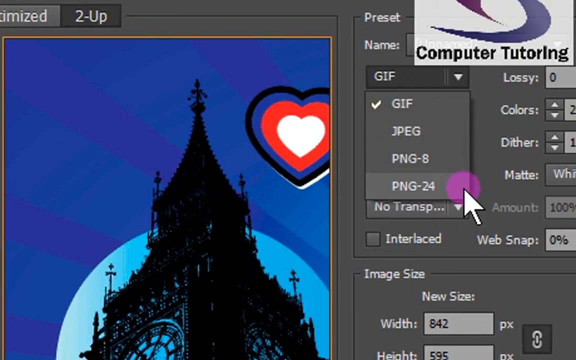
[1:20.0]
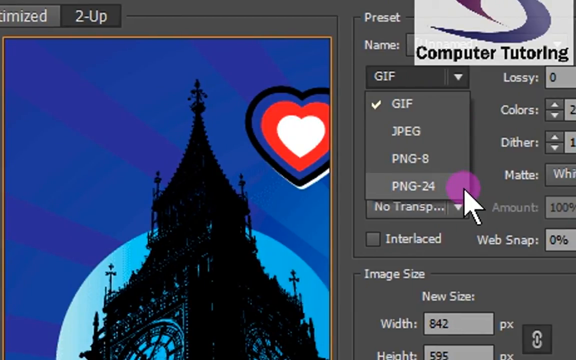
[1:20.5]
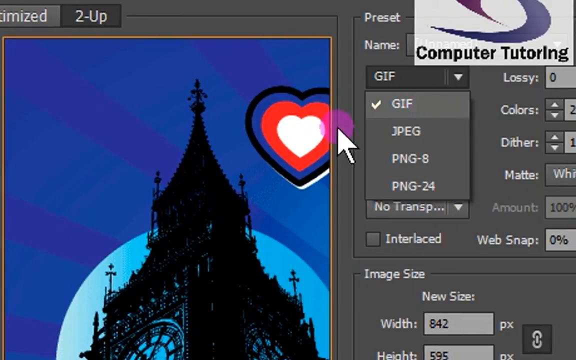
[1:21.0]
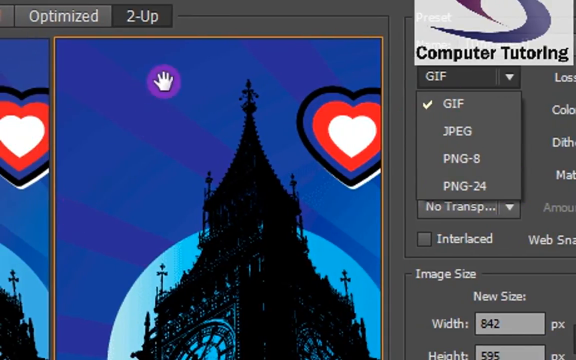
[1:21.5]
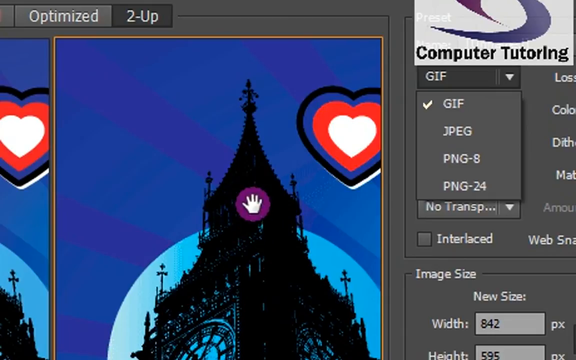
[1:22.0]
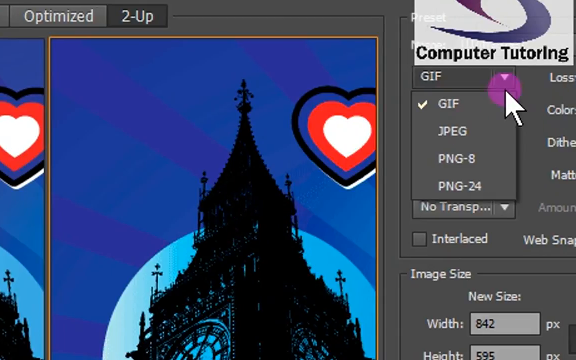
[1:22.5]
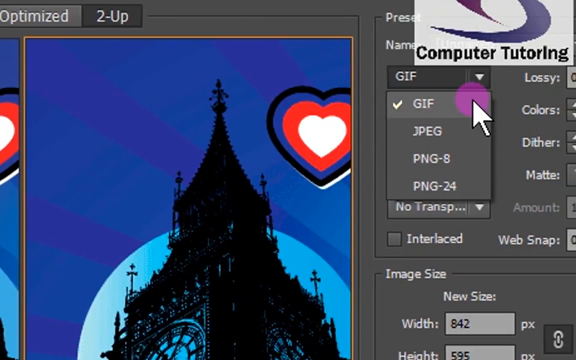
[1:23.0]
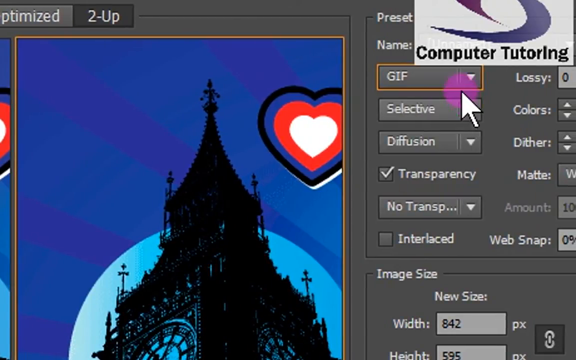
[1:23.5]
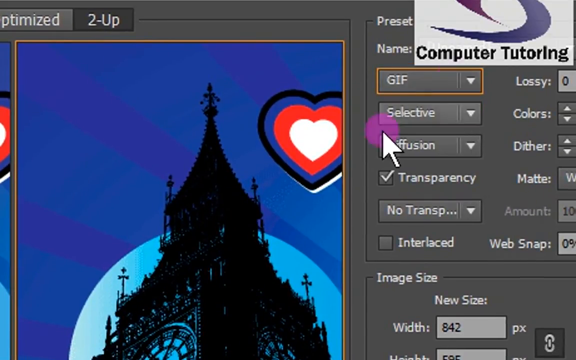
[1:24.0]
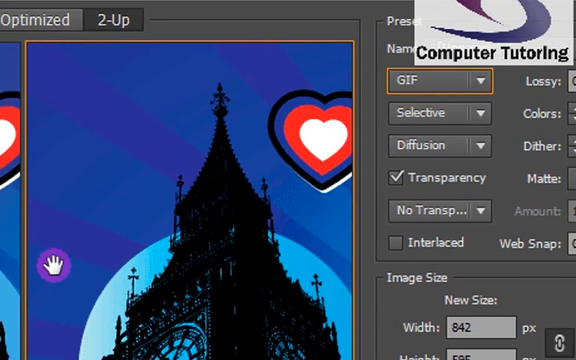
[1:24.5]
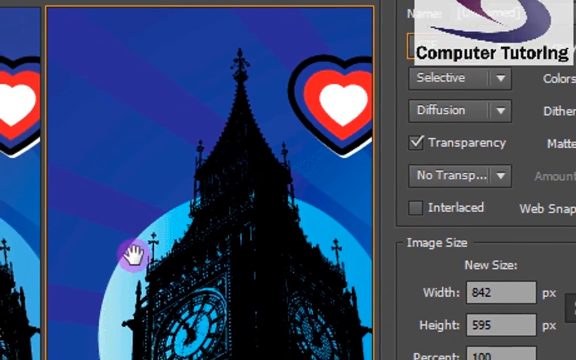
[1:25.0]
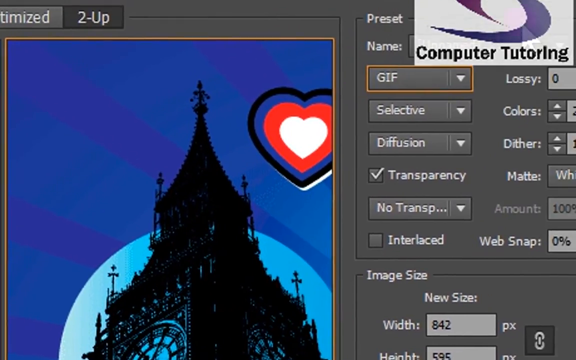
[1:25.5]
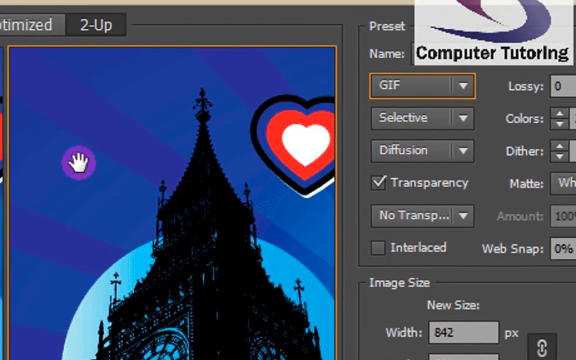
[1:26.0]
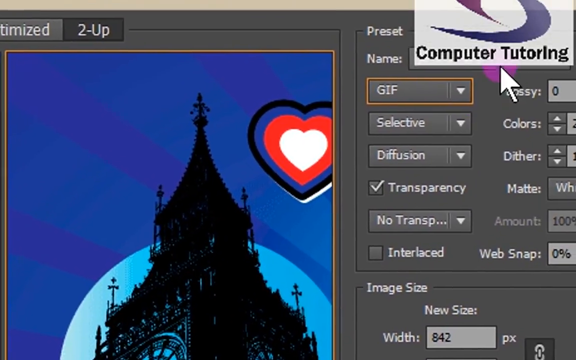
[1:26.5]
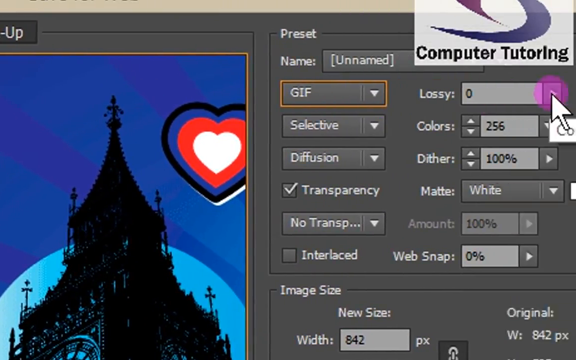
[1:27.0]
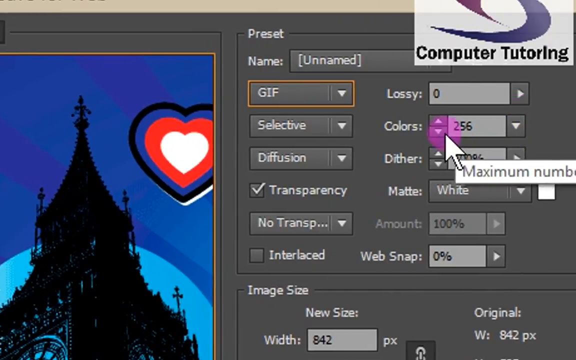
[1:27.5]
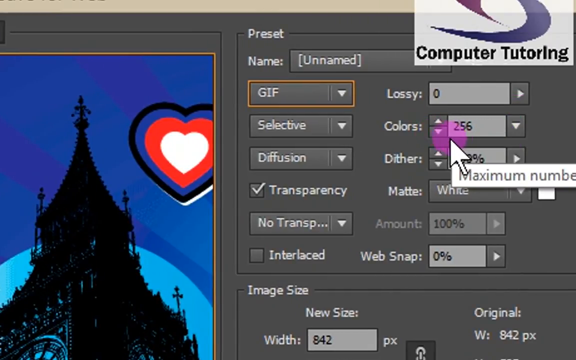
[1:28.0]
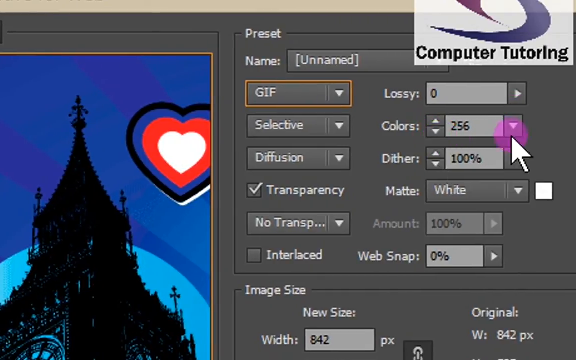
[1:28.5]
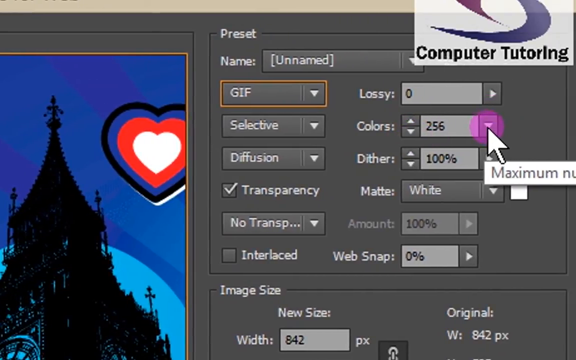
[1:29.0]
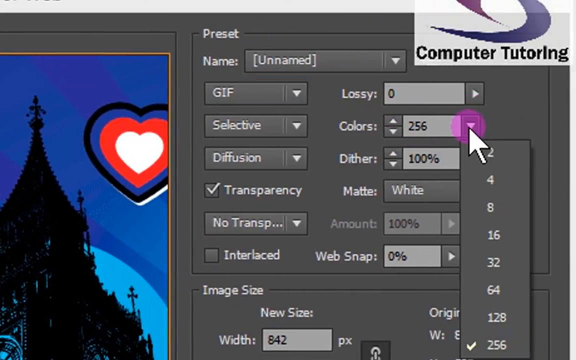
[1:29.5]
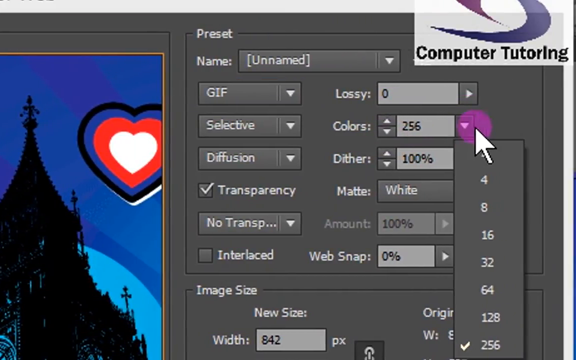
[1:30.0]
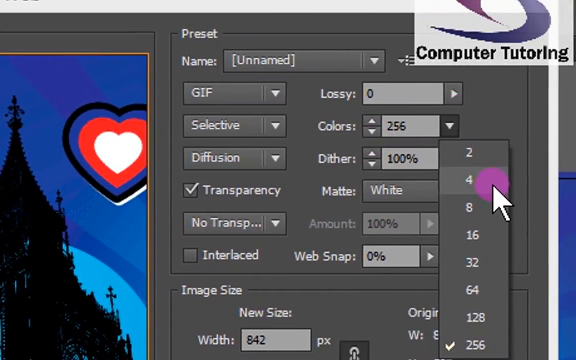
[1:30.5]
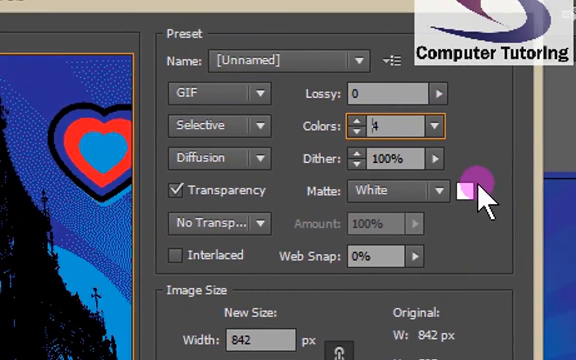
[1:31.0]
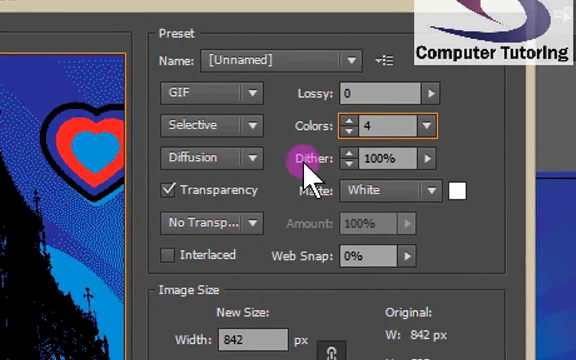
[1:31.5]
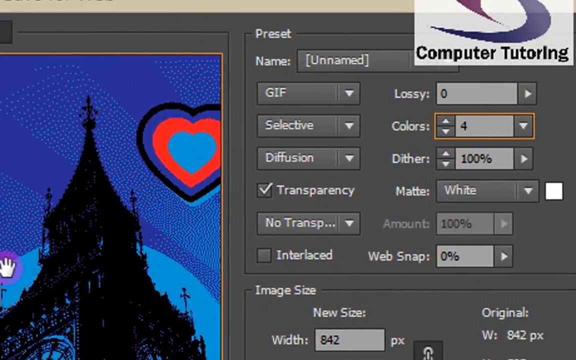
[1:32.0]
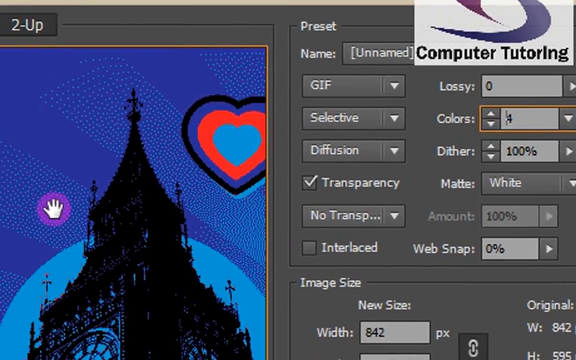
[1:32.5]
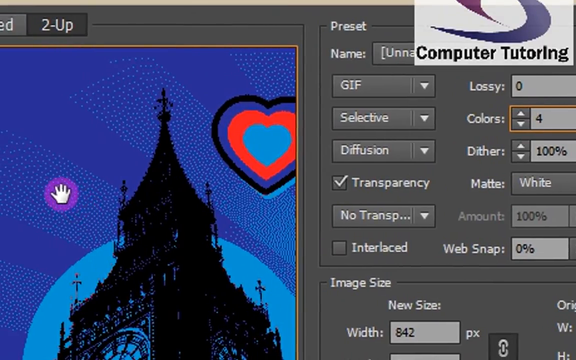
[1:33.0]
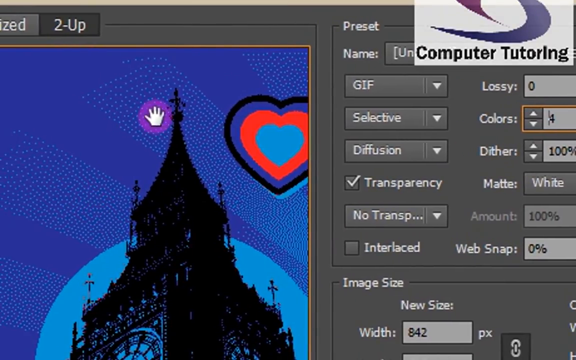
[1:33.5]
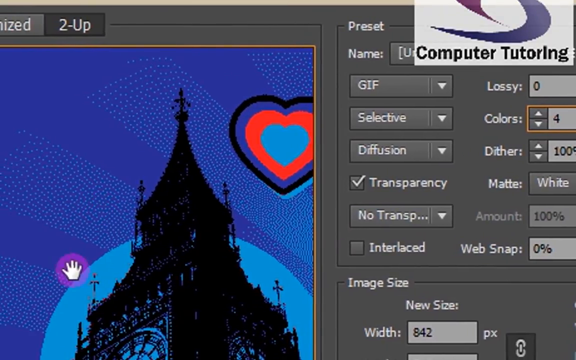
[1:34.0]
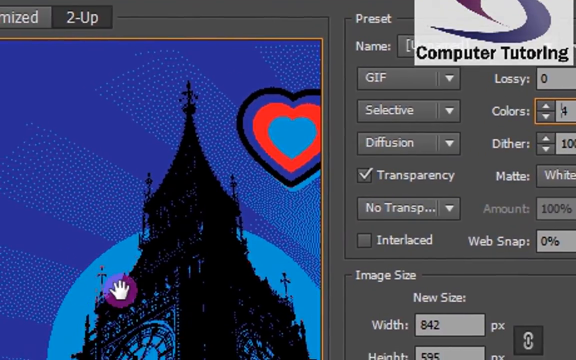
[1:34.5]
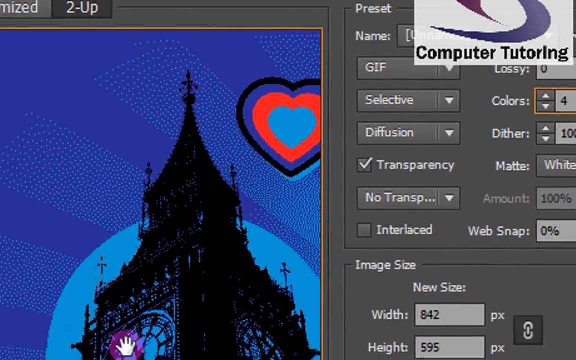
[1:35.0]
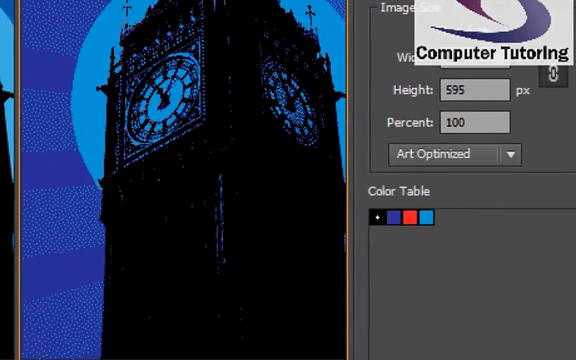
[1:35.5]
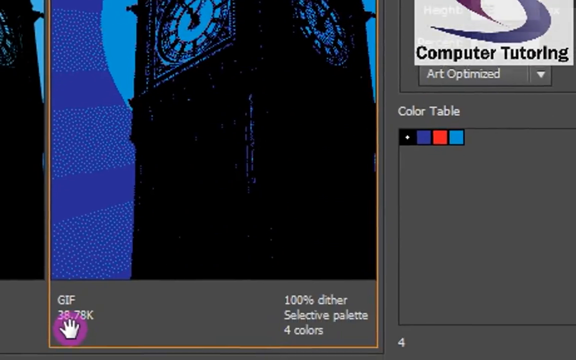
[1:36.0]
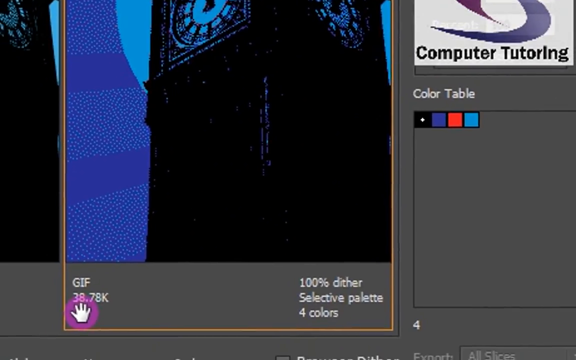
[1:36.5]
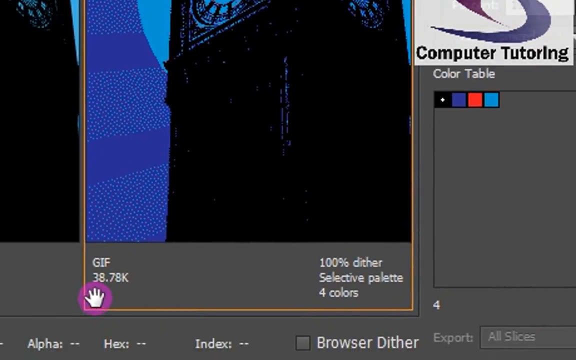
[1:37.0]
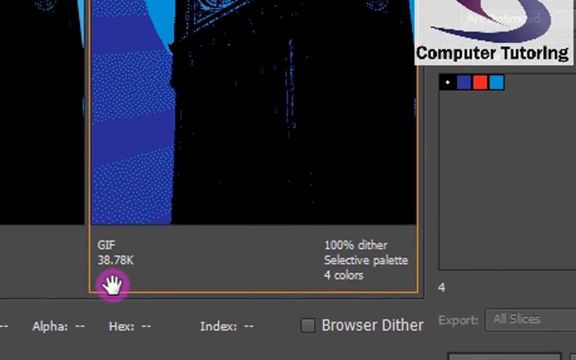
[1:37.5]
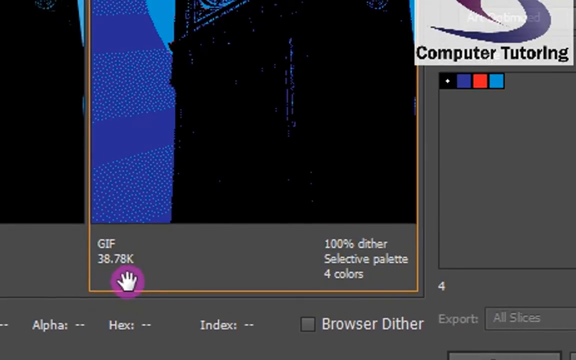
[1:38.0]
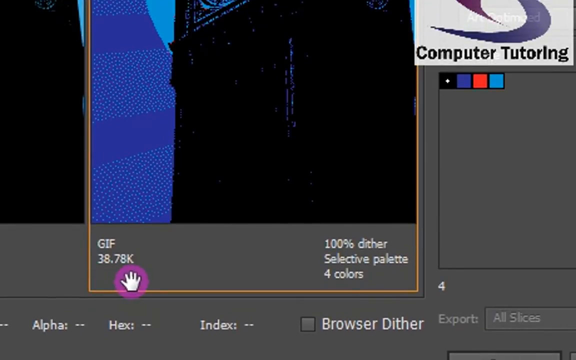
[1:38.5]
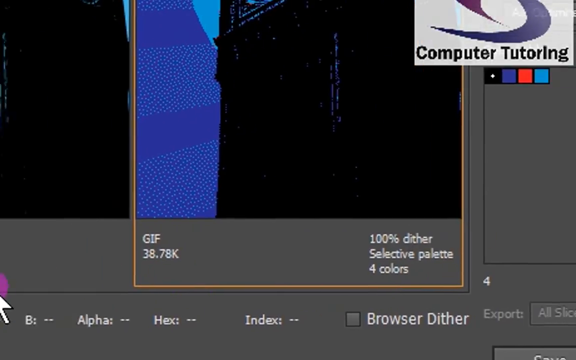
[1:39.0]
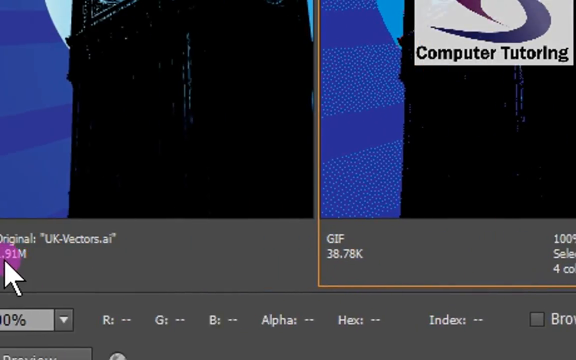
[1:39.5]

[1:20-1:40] A computer tutorial shows a logo in the right-hand corner that seems superimposed and stays on every screen, reading "Computer Tutoring" with a swirly logo in purple and blue. In a Windows program, the person manipulates a computer-generated image of Big Ben that has been cut down from a larger picture, selecting the margins and appearing about to save it as PNG-24. The cursor is a purple dot, a round circle, with a grab hand occasionally popping out. The format changes to GIF. The cursor goes over to color and selects different numbers, reducing 256 to four, then hovers over Big Ben. At the bottom, numbers are shown, reading "GIF 38.78 K".